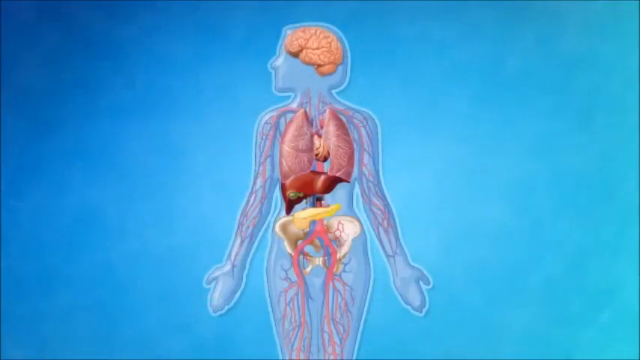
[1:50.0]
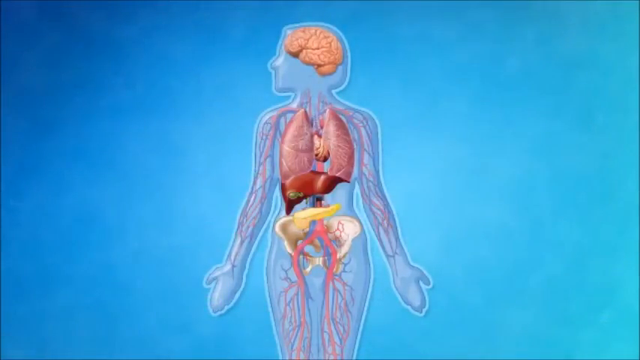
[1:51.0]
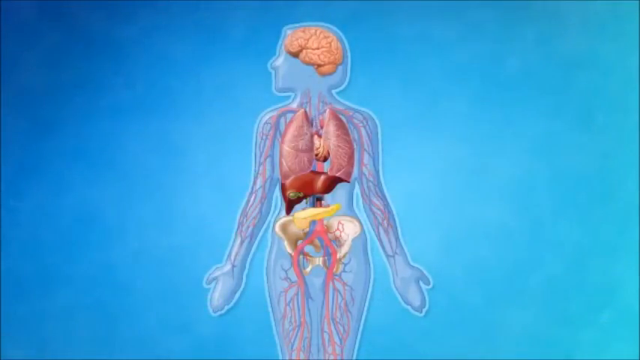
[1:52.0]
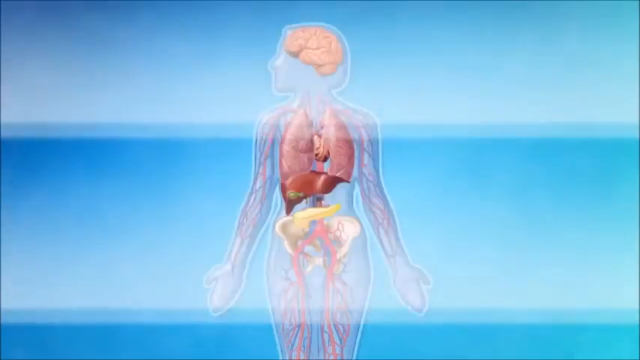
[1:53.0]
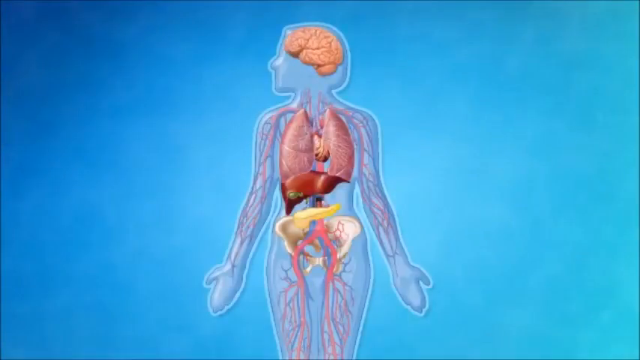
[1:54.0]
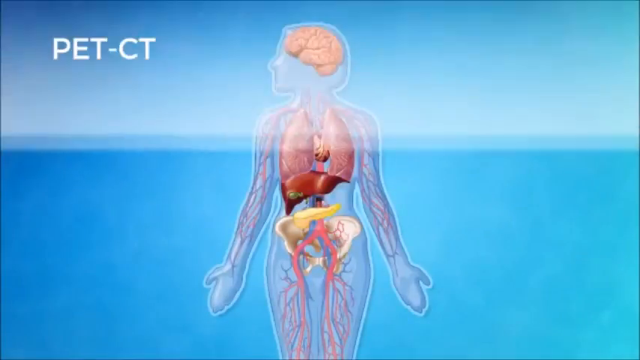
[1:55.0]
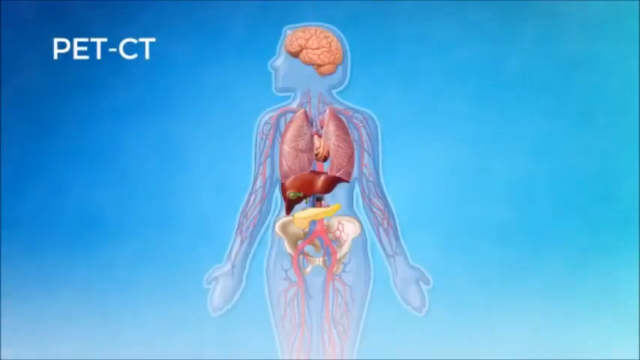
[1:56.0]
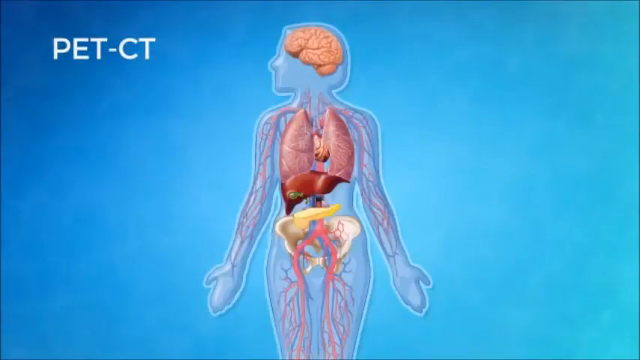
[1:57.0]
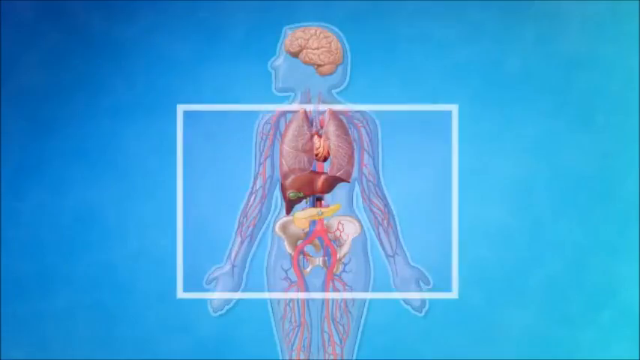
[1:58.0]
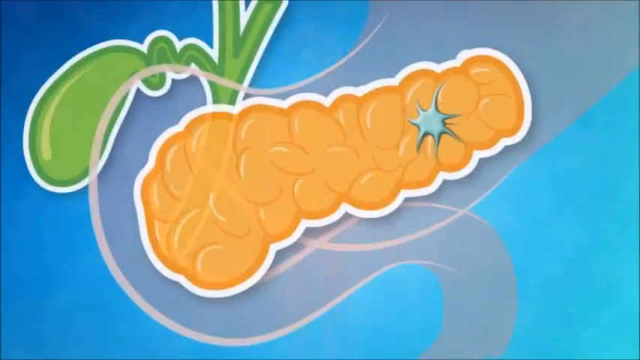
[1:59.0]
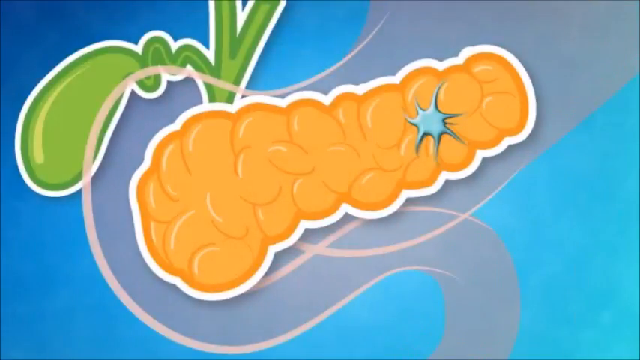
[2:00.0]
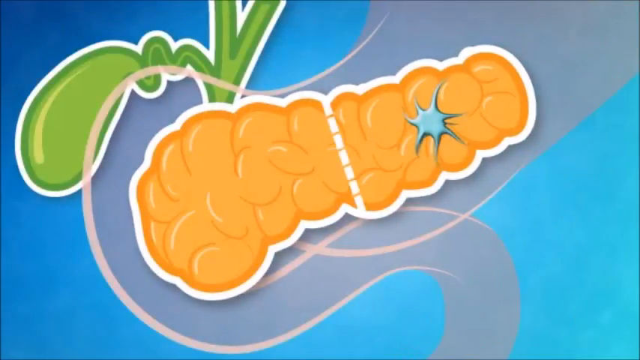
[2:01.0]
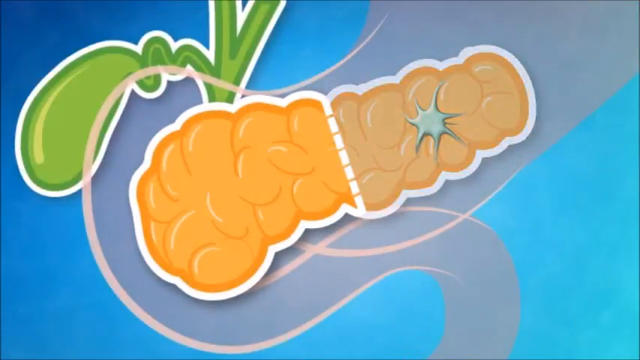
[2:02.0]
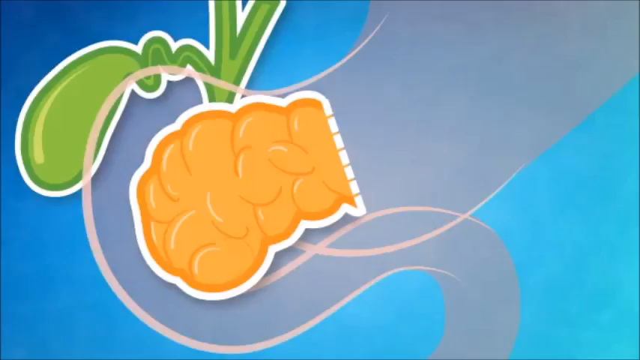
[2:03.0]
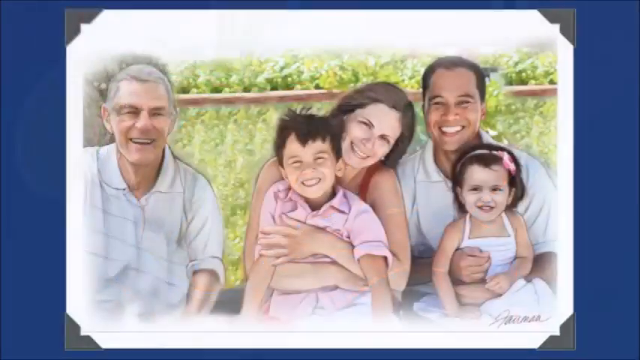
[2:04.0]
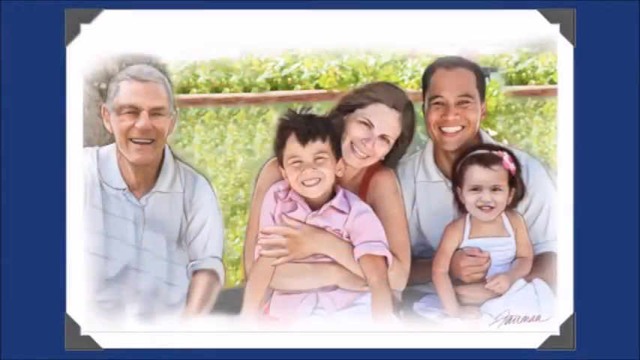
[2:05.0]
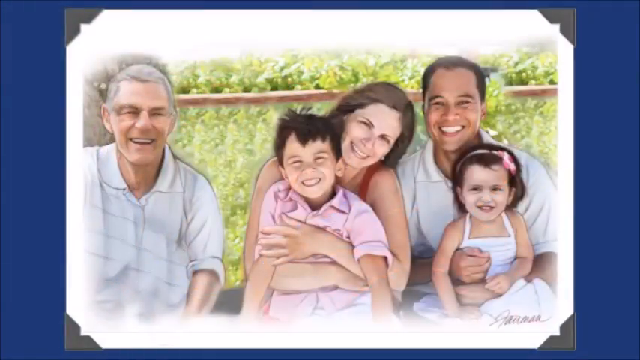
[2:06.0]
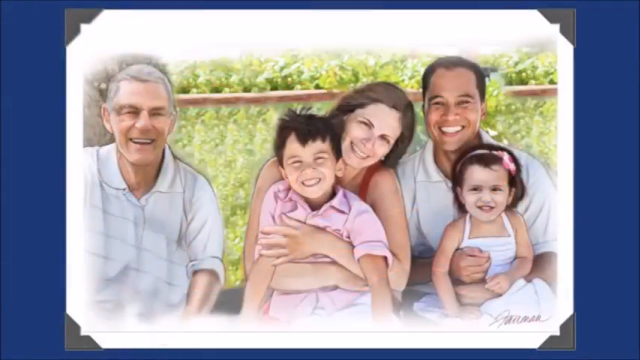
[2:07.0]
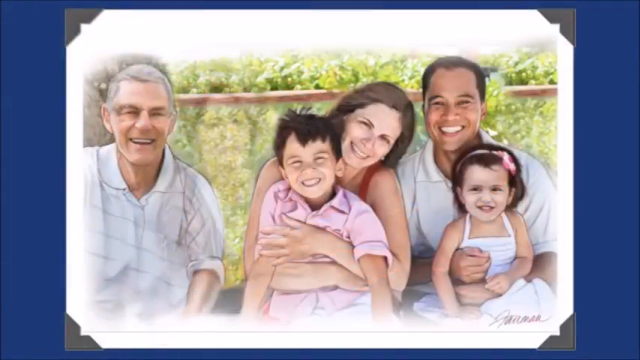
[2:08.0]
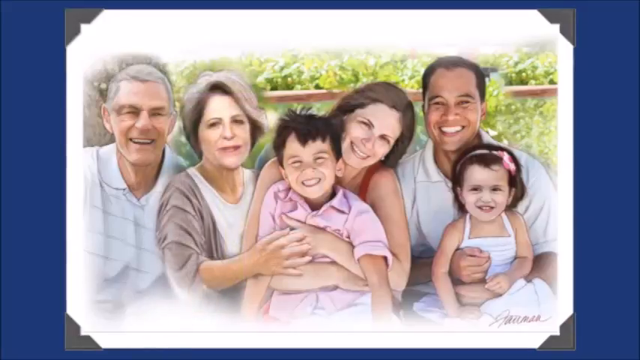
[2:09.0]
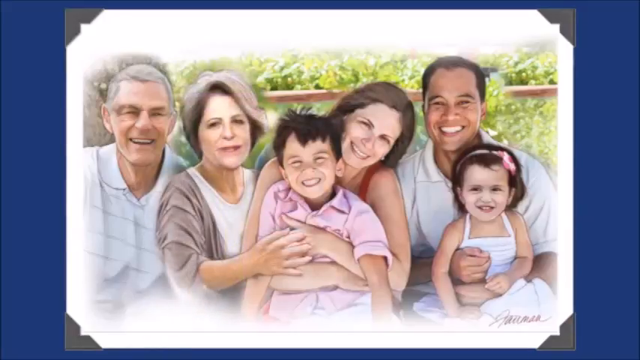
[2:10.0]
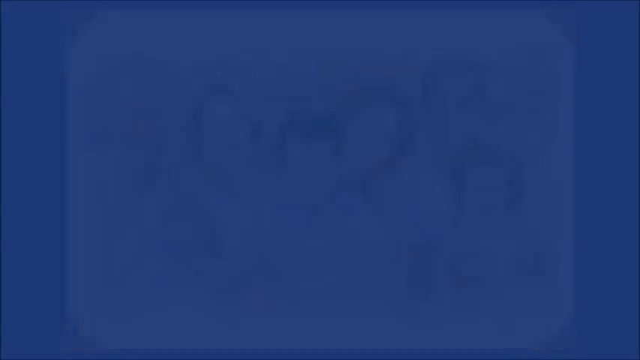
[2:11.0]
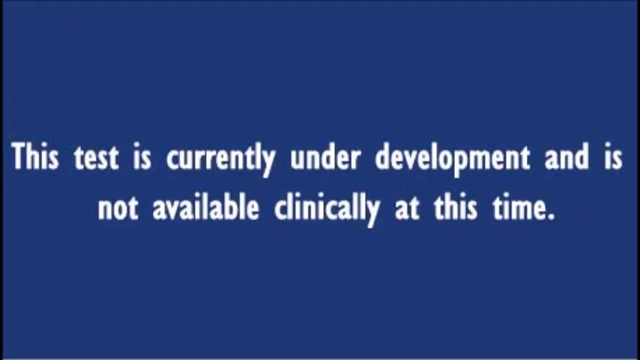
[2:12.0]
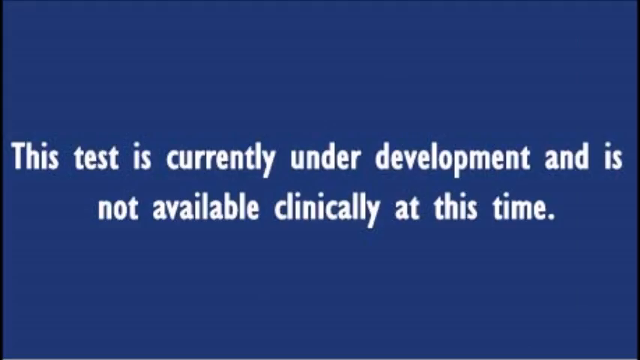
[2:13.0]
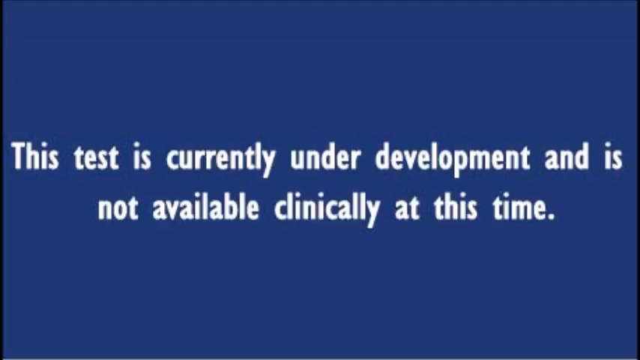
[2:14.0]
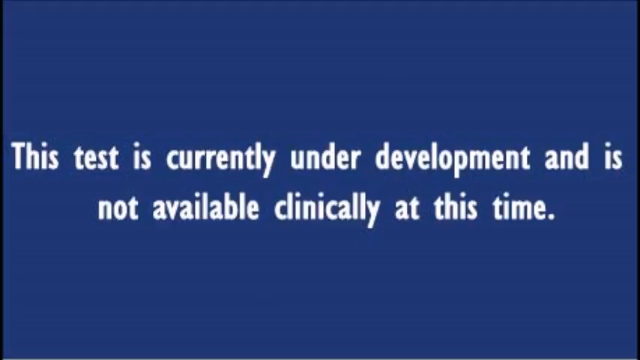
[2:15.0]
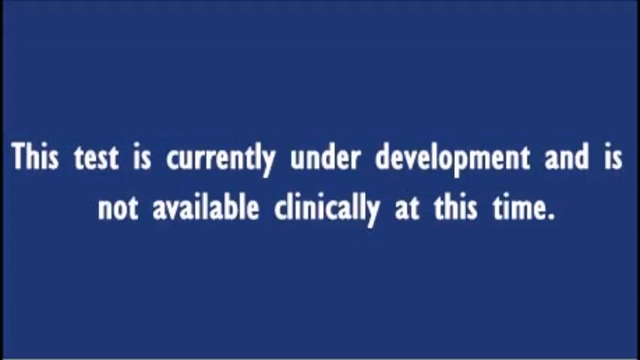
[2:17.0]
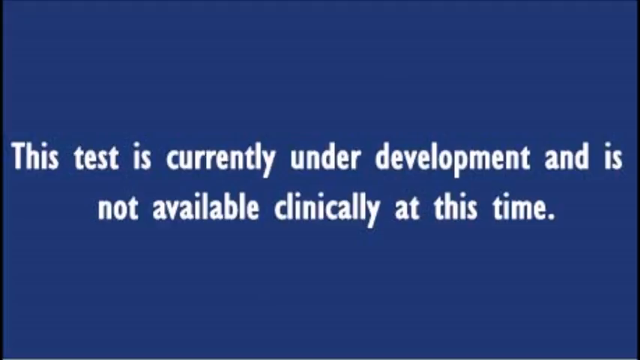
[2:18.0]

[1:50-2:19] On the blue background is the diagram or animation of the woman. The head faces toward the left, the palms are out, and the nerve systems, brain, heart, lungs, liver and pancreas are visible. The pelvic bones can be seen in the background behind the pancreas and nerve systems. In the top left corner, in large semi-transparent white letters, appears "PET CT"; the letters then fill in and become fully white. The text disappears, a box appears around the woman, and a cartoonish-looking diagram of what looks like the pancreas appears. The screen transitions back to the photograph, and the grandmother appears again in the image. The photo disappears, and on a dark blue background, centered white text reads "this test is currently under development and is not available clinically at this time".